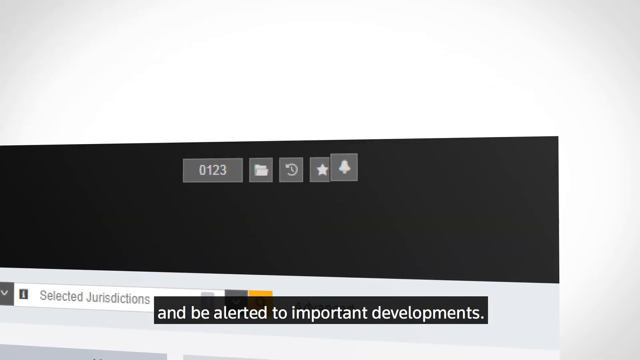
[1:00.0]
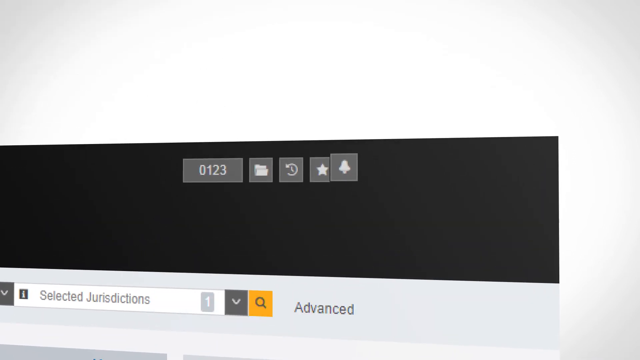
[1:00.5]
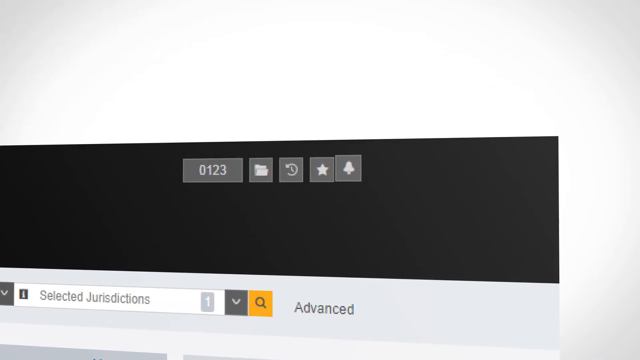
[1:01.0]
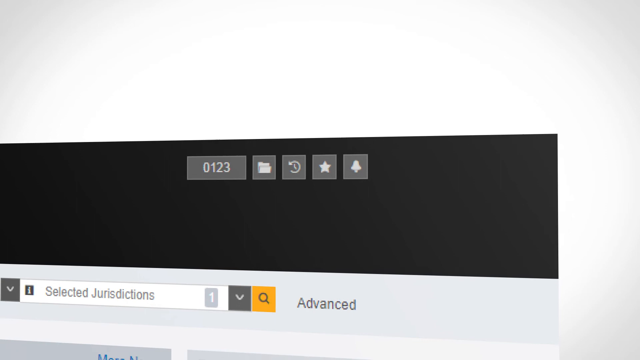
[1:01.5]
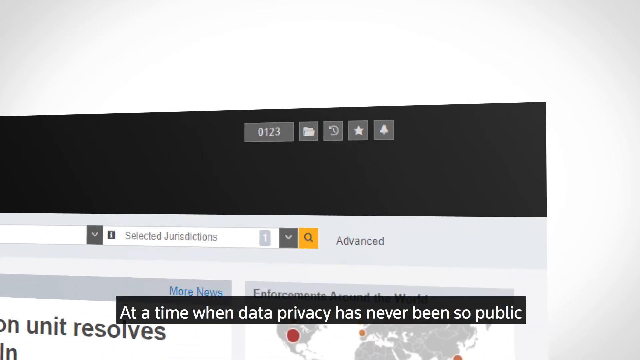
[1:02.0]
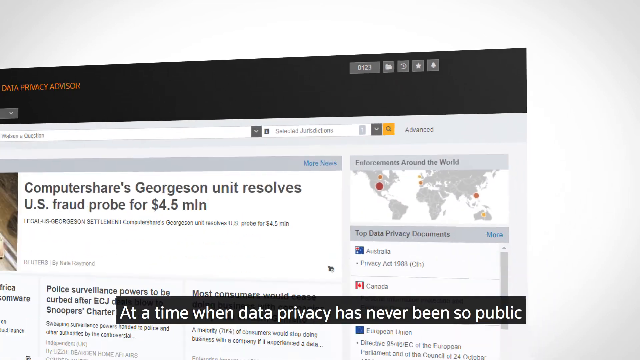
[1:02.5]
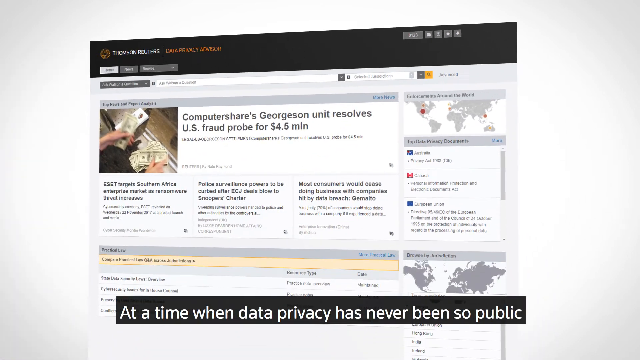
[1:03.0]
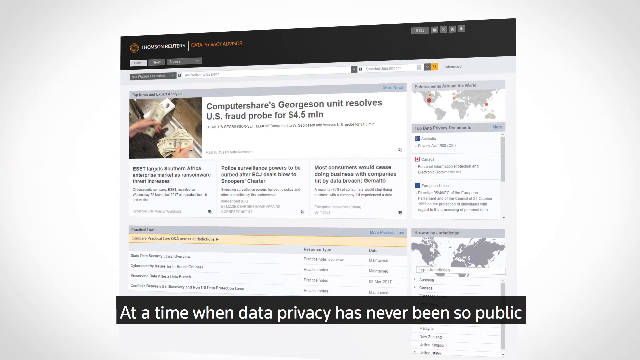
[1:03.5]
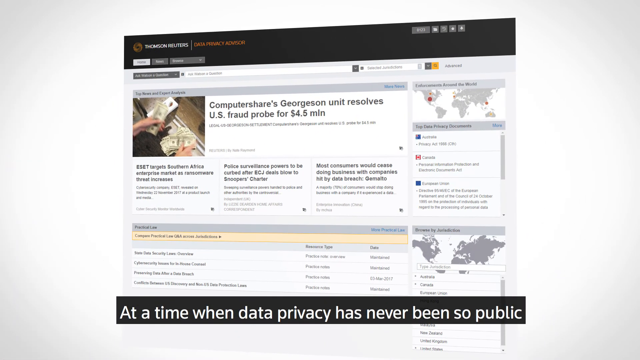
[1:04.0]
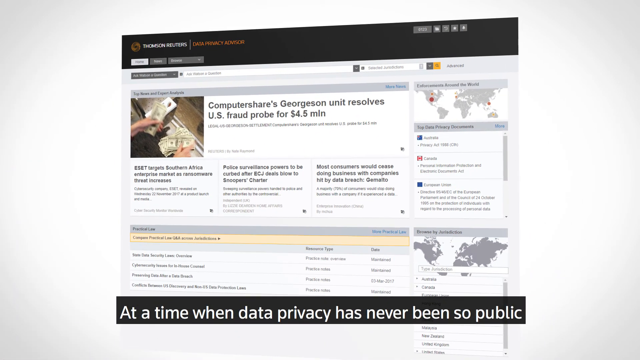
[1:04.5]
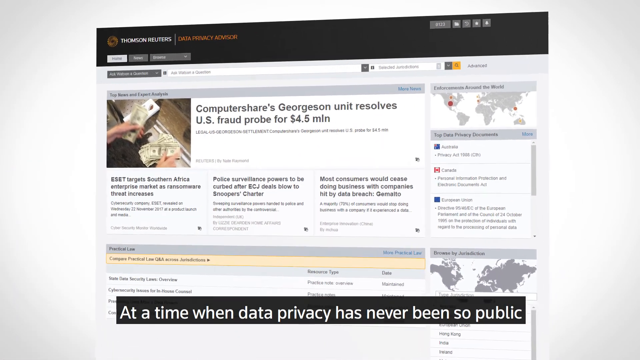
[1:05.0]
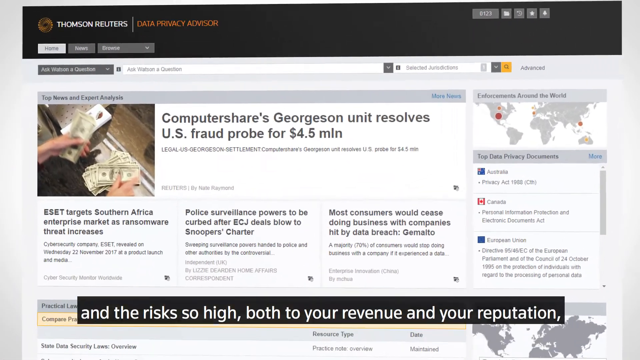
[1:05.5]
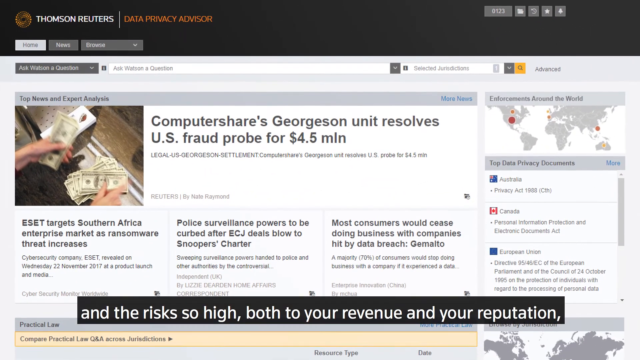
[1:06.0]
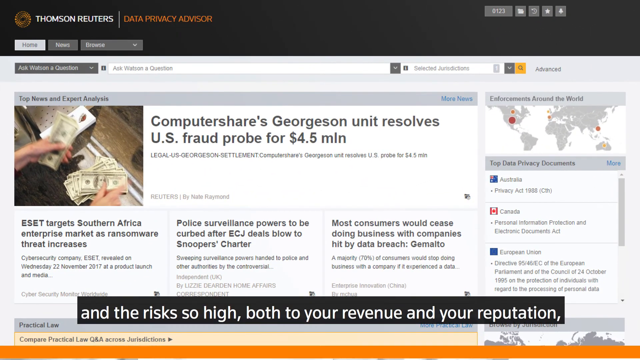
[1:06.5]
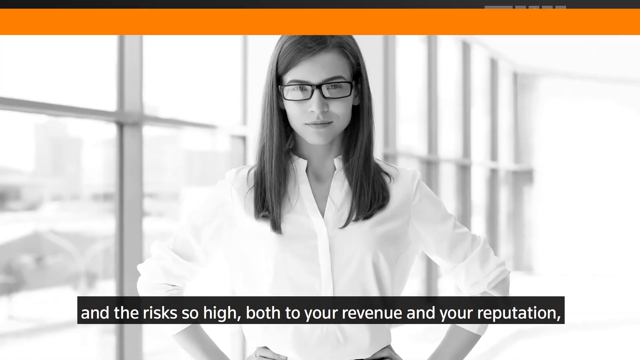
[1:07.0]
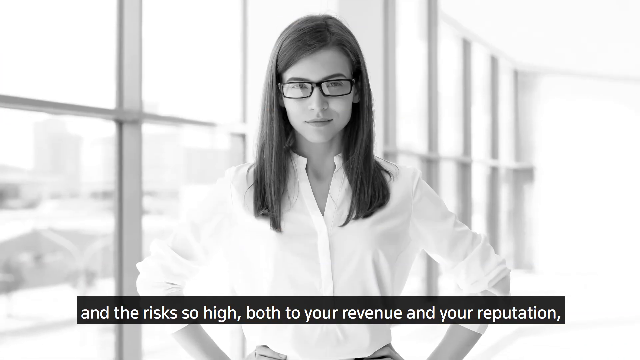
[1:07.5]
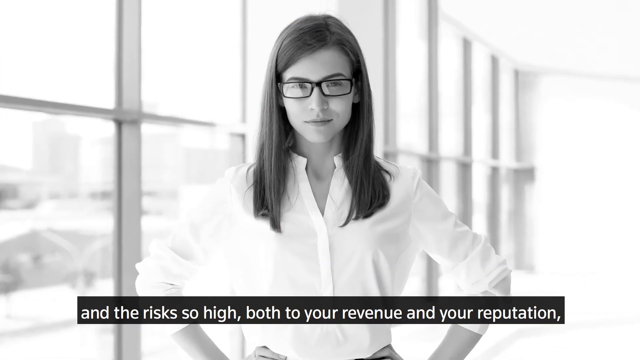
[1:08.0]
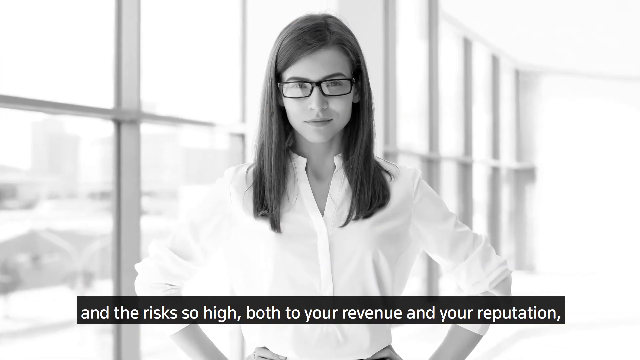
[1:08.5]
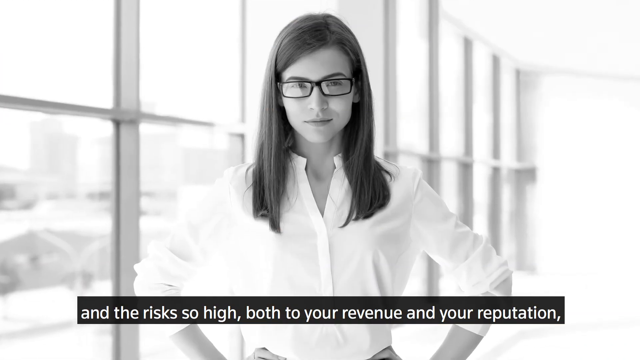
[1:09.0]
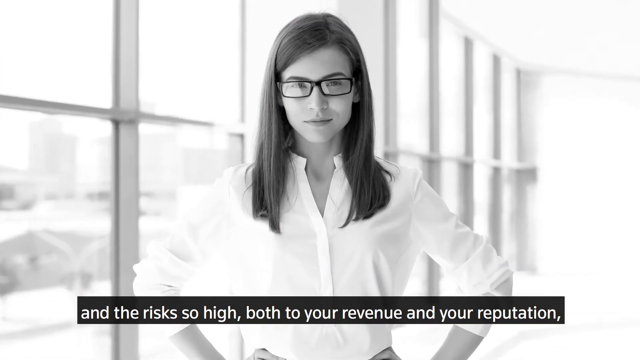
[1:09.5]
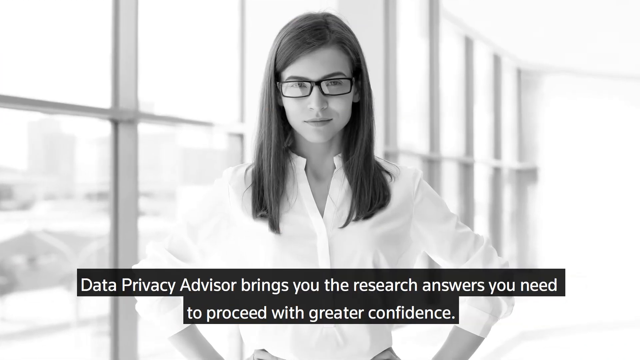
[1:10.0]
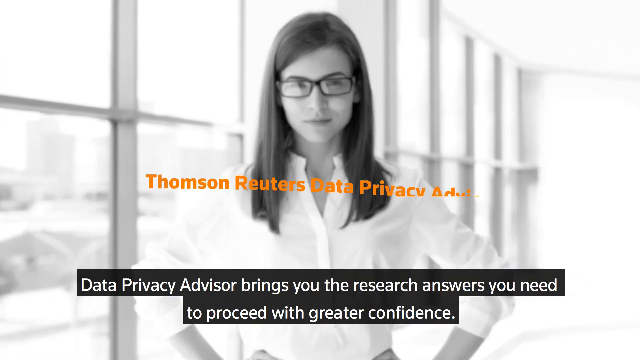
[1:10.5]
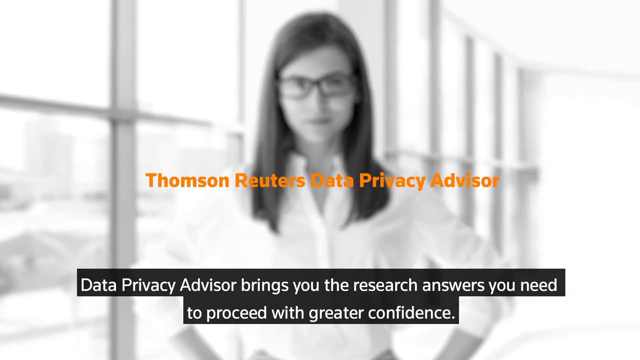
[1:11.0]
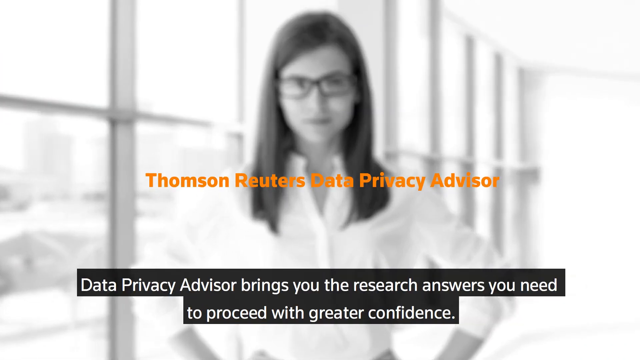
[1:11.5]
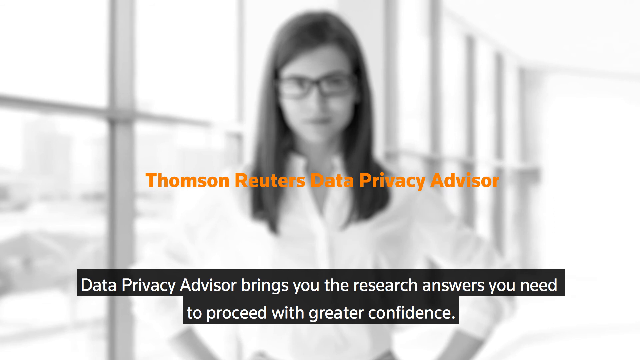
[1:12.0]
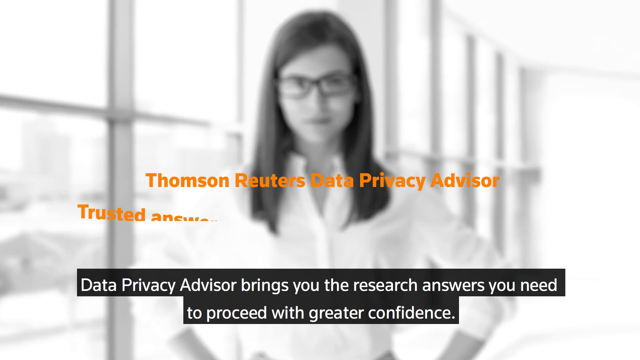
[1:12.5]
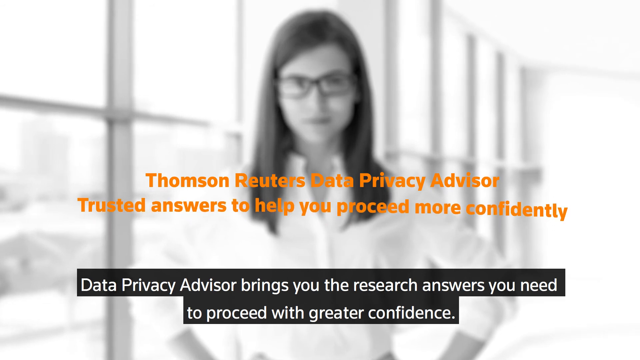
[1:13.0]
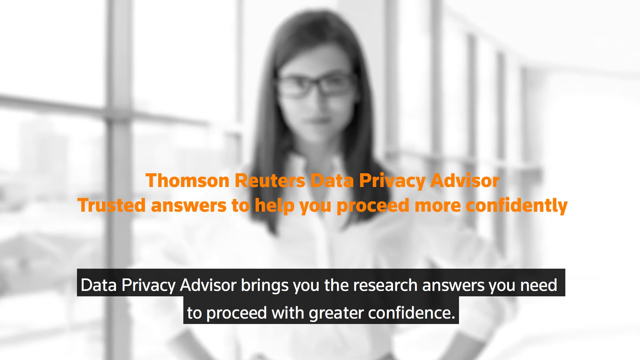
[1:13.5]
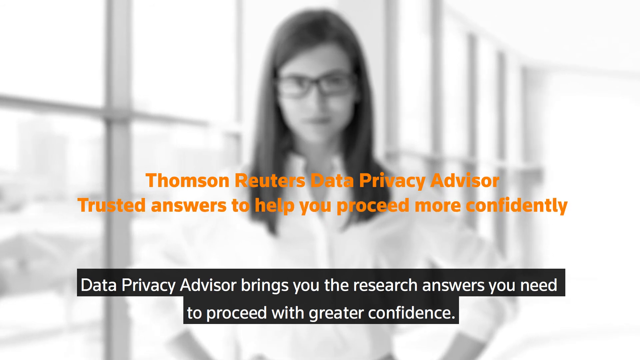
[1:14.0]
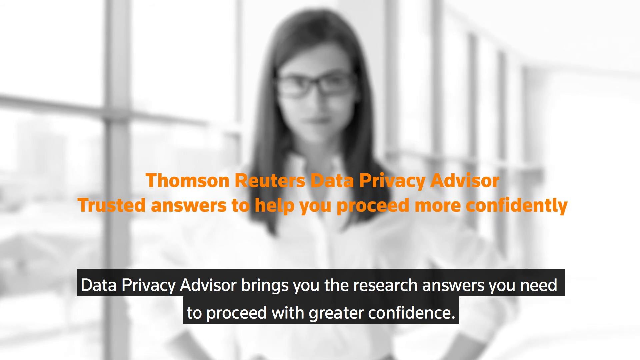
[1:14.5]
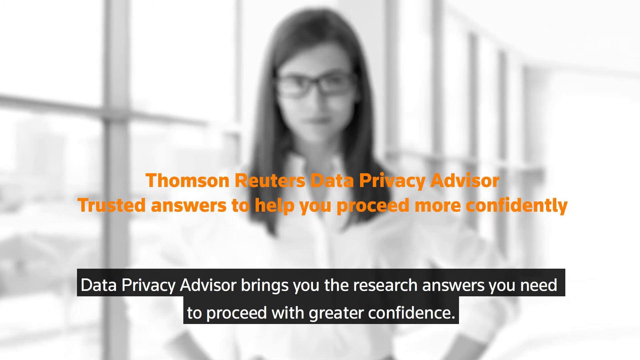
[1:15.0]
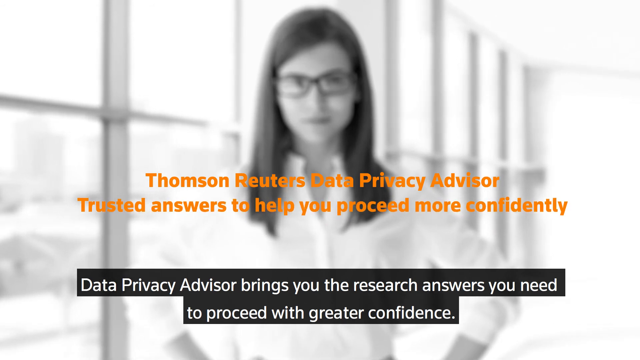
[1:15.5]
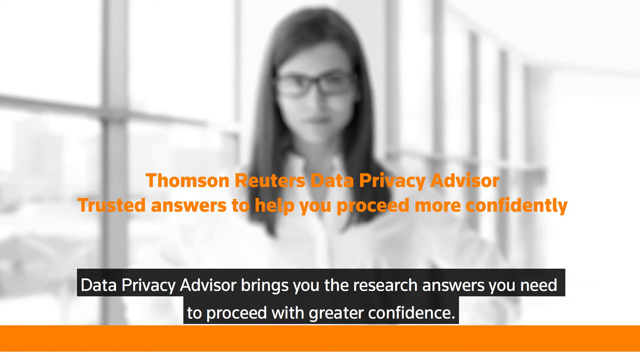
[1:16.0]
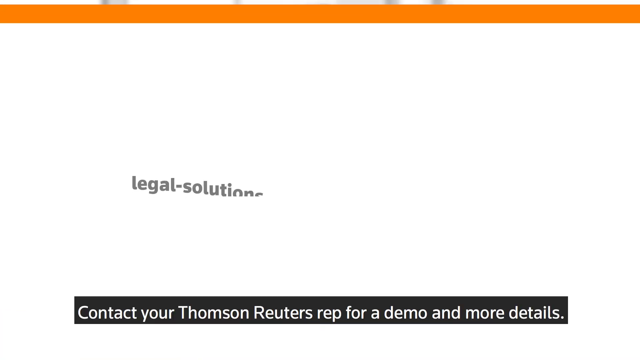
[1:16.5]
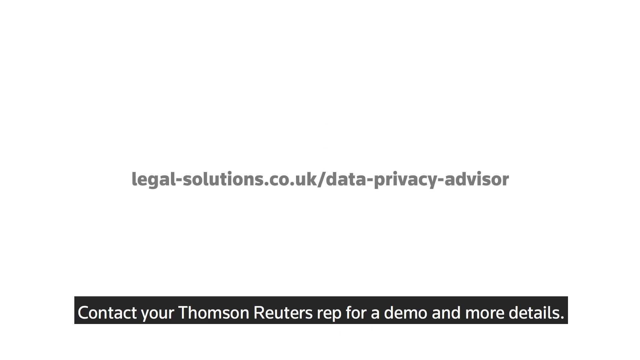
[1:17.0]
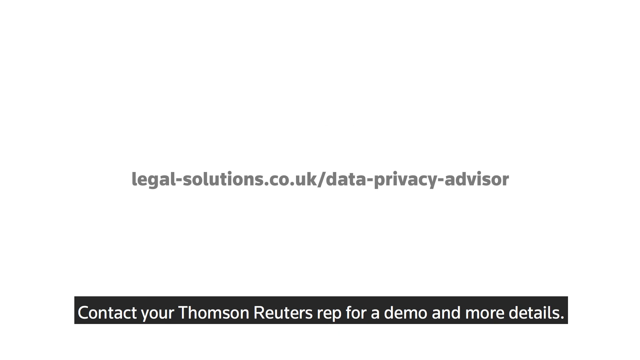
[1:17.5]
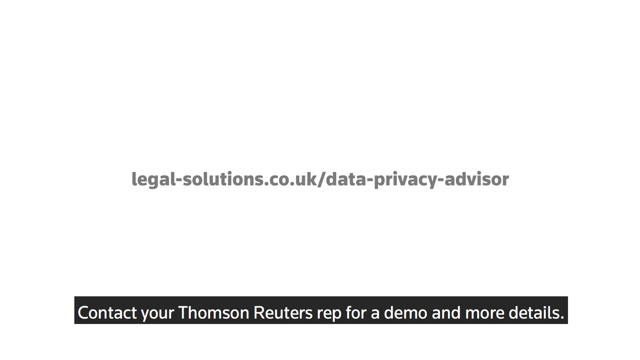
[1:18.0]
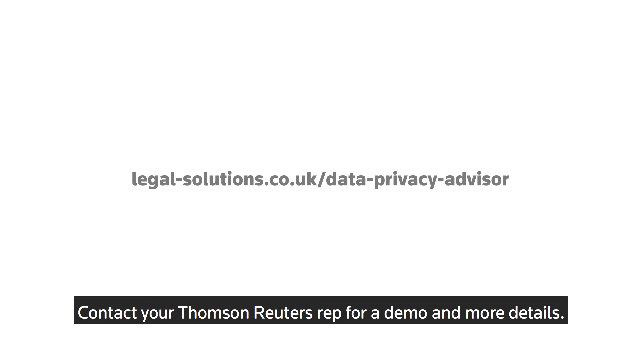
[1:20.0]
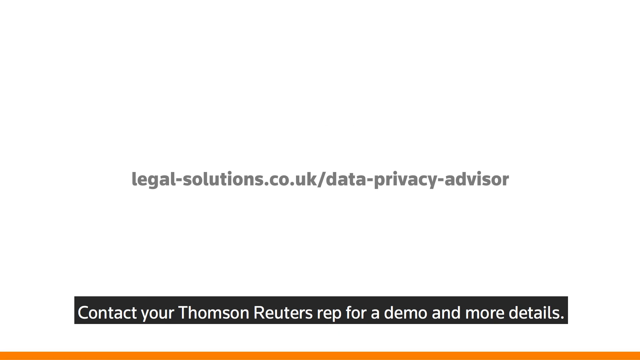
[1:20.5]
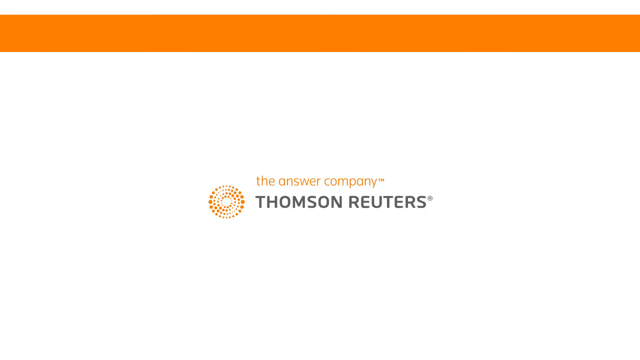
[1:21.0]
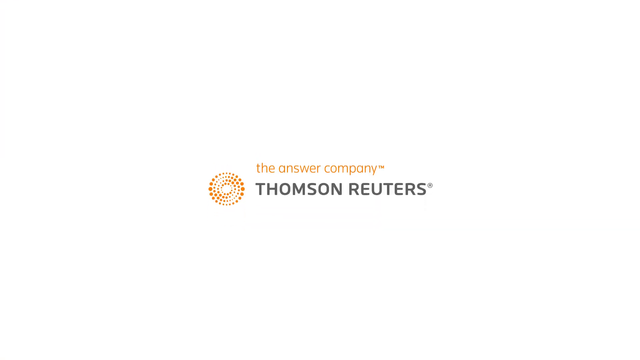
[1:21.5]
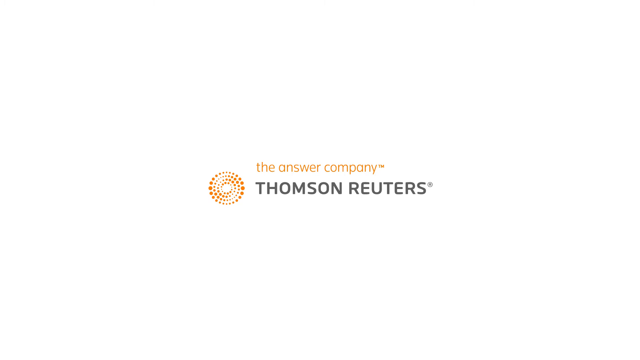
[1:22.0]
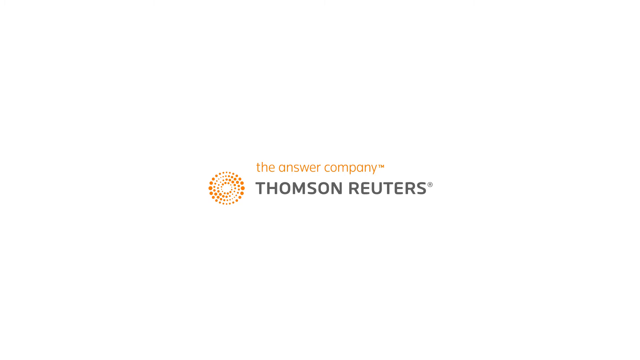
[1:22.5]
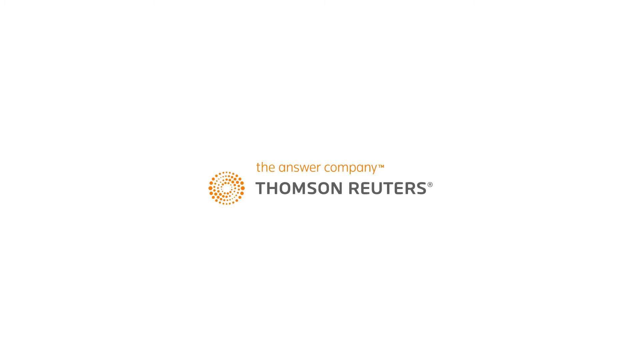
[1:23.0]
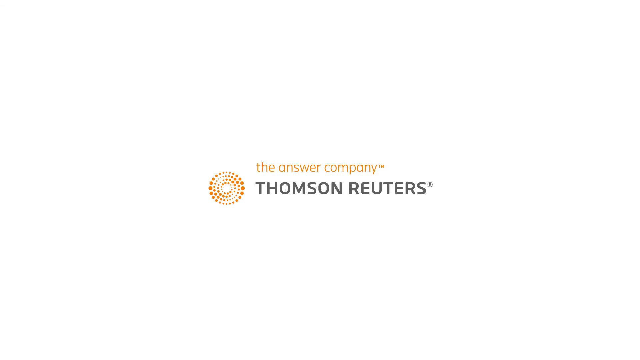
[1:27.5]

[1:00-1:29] The view zooms out from the notification bell, showing the Thompson Reuters Data Privacy Advisor web page again. Then a black-and-white picture of a woman appears, with subtitles still at the bottom. The picture becomes blurred, and a slide of bright orange letters over the blurred picture of the woman reads "Thompson Reuters Data Privacy Advisor Trusted answers to help you proceed more confidently." Next comes a plain white slide with the company's website on it, a flash of orange, and finally the company's logo: the answer company, Thompson Reuters.